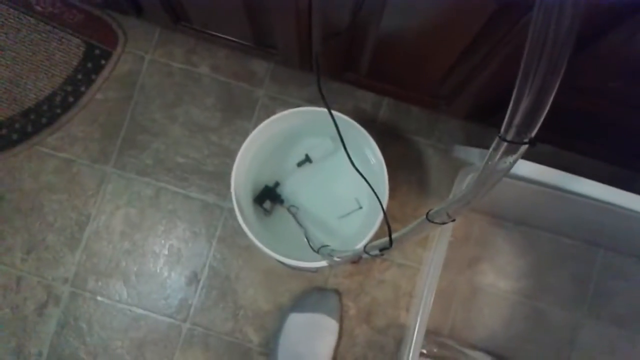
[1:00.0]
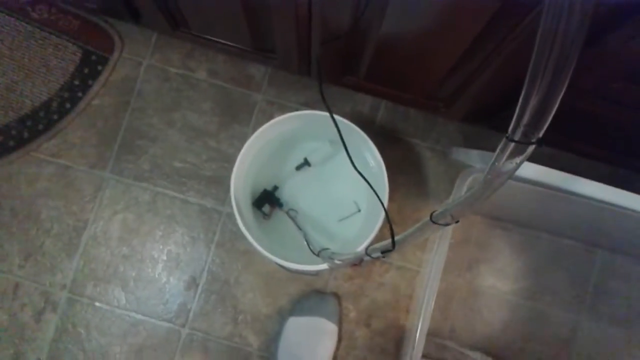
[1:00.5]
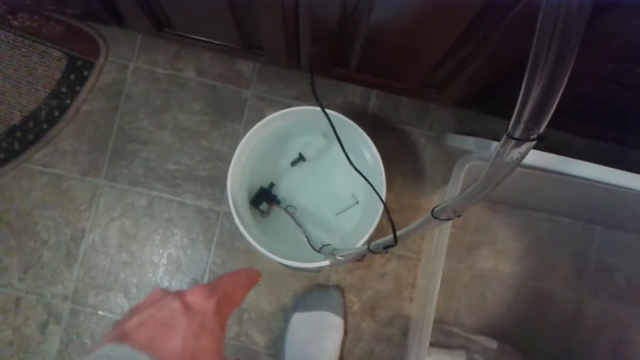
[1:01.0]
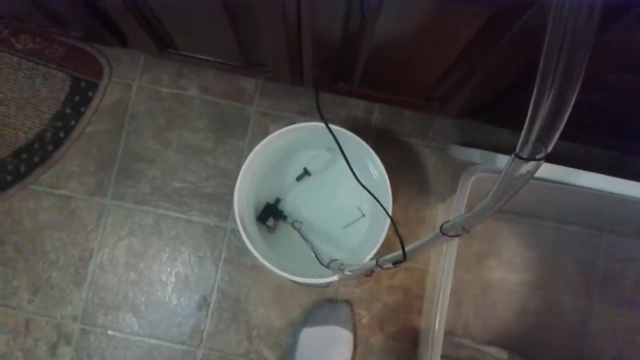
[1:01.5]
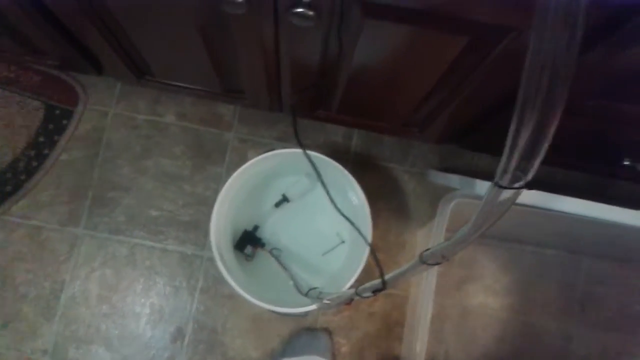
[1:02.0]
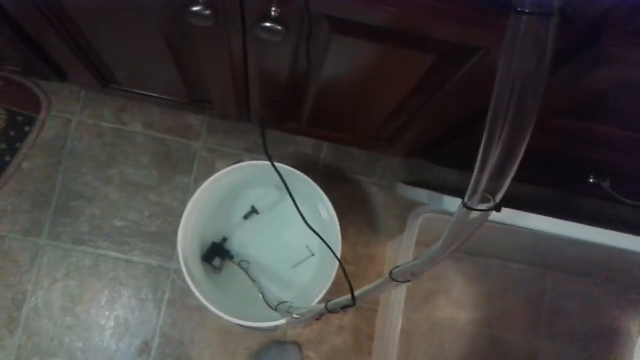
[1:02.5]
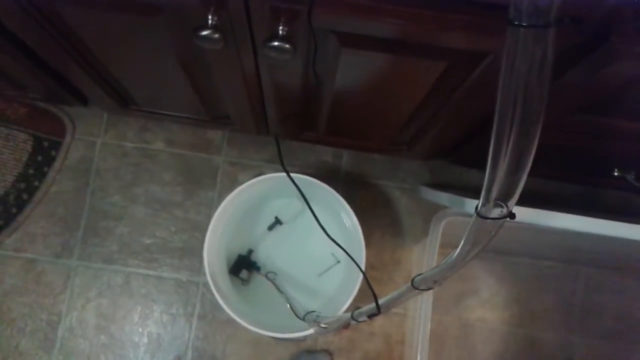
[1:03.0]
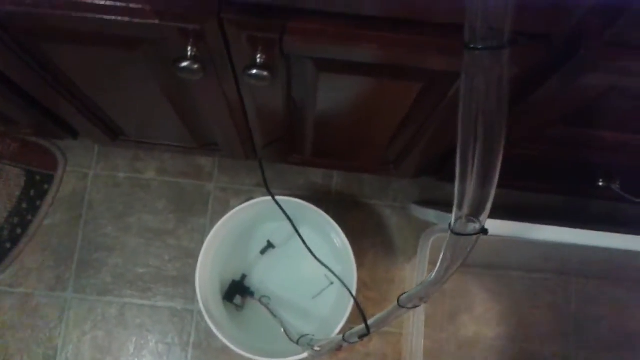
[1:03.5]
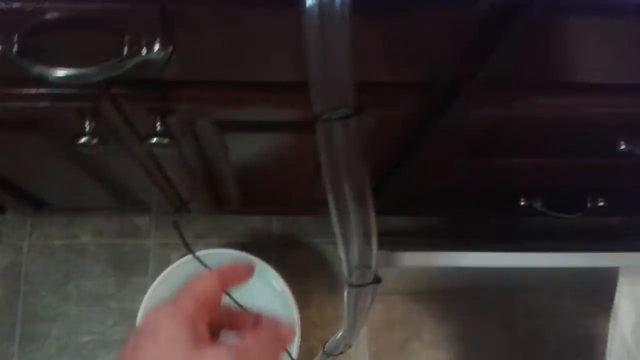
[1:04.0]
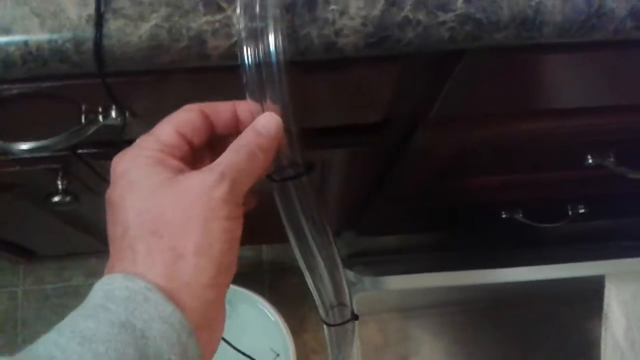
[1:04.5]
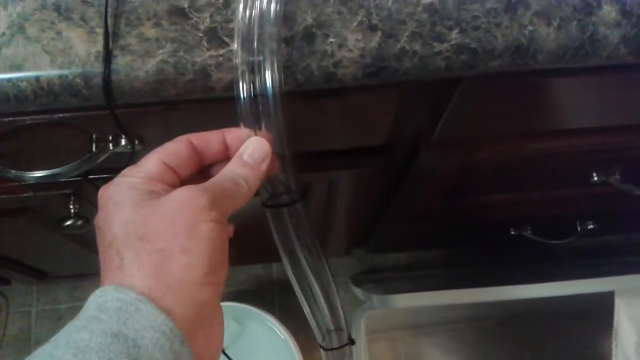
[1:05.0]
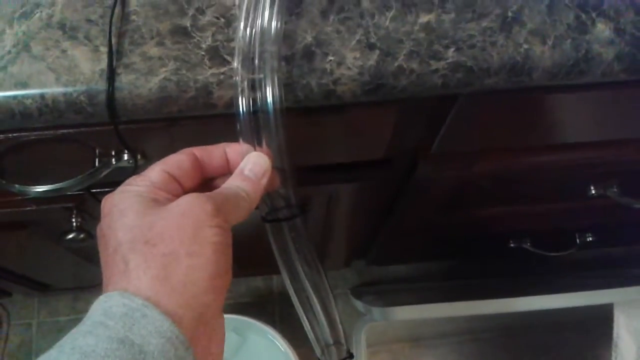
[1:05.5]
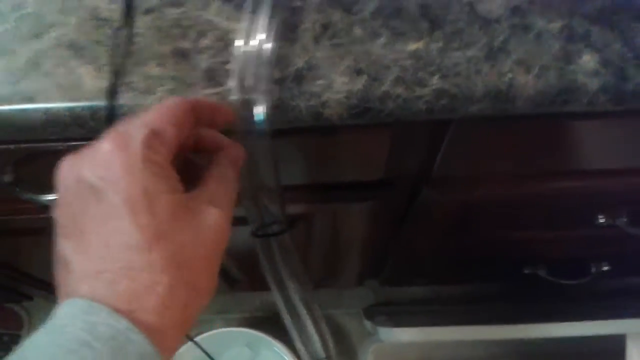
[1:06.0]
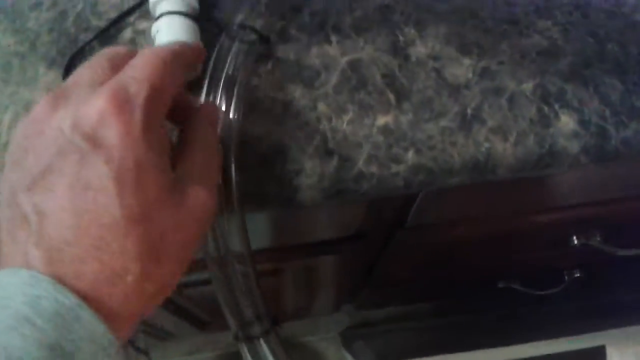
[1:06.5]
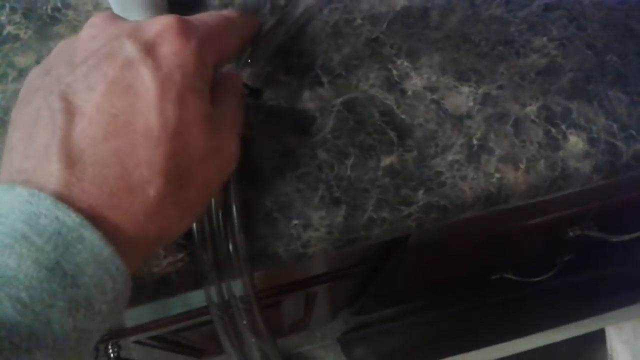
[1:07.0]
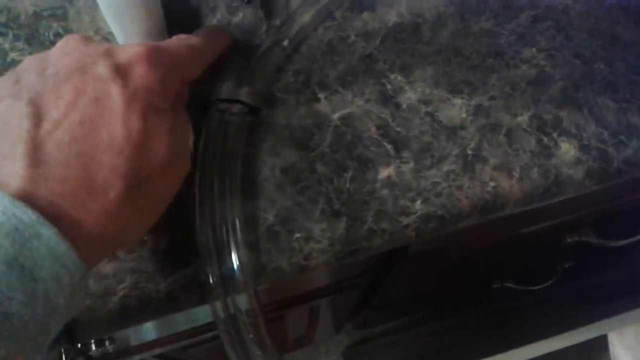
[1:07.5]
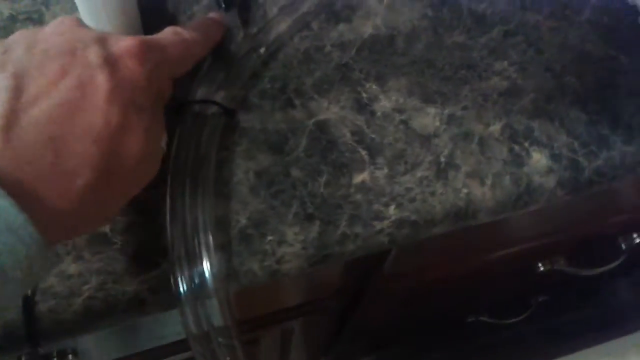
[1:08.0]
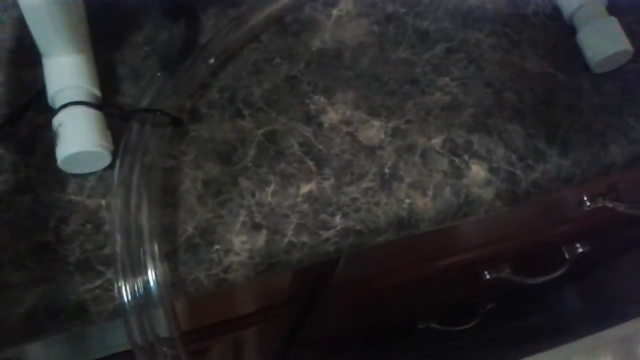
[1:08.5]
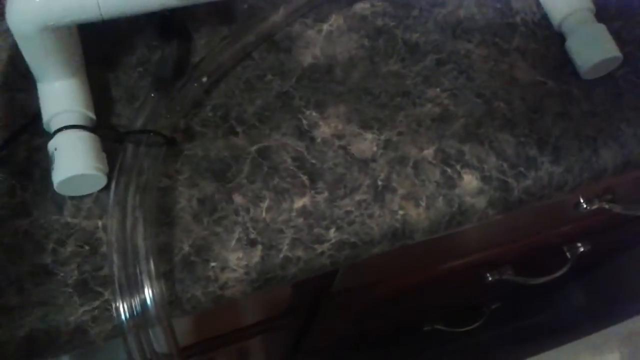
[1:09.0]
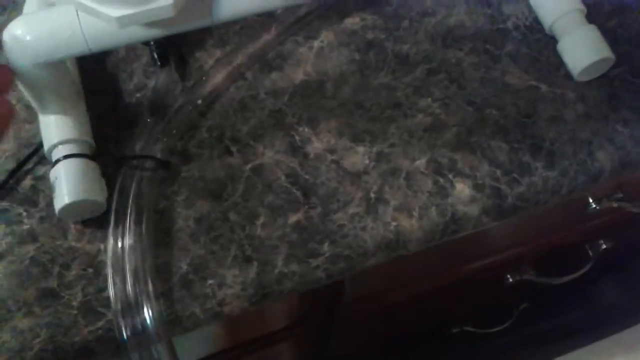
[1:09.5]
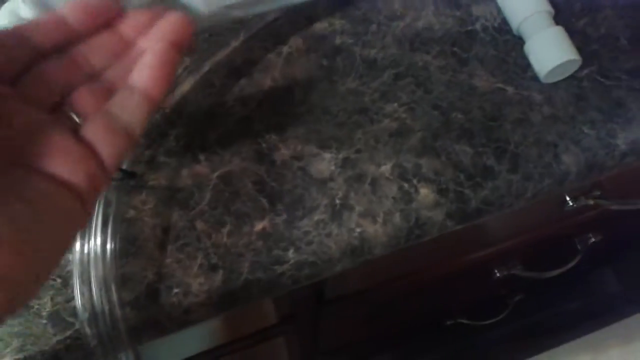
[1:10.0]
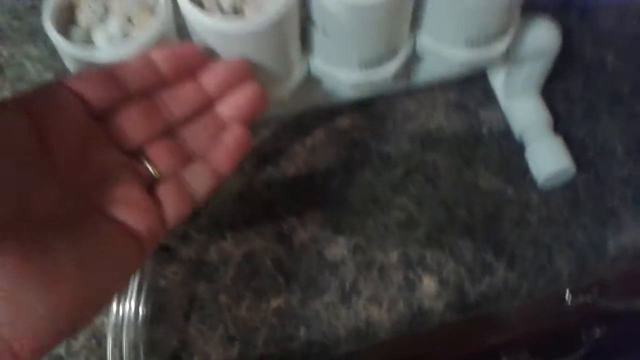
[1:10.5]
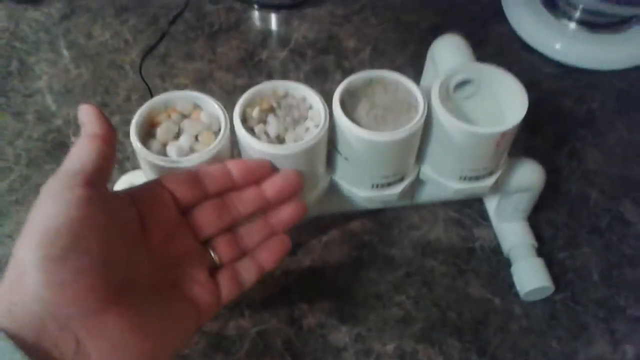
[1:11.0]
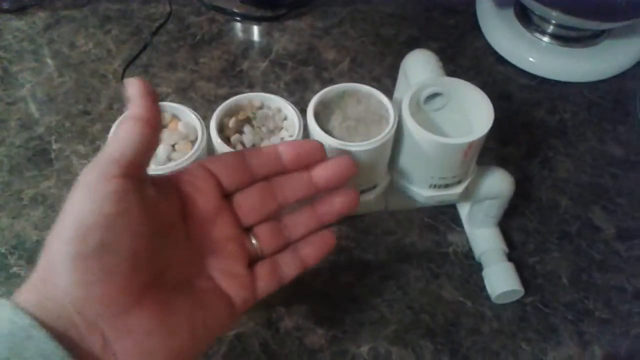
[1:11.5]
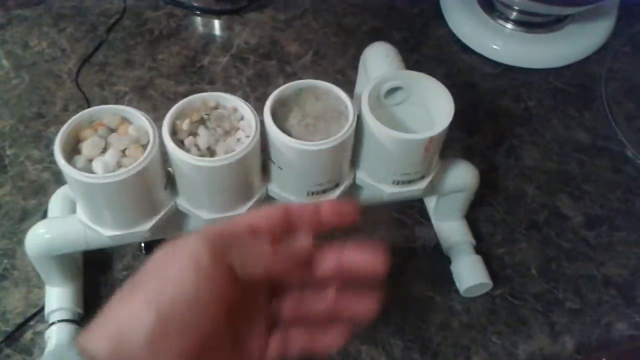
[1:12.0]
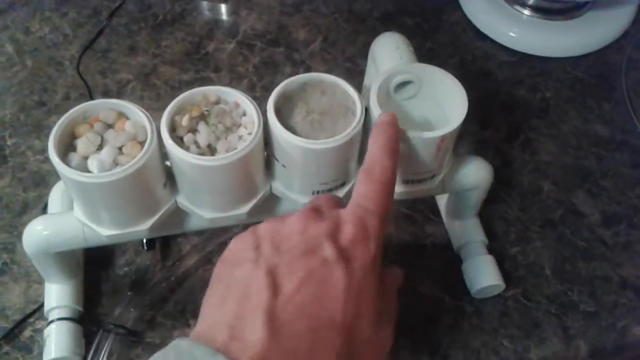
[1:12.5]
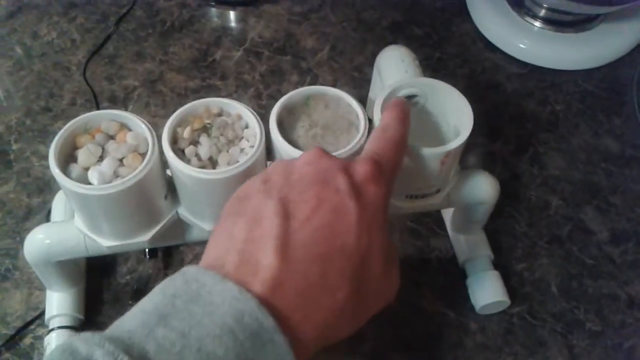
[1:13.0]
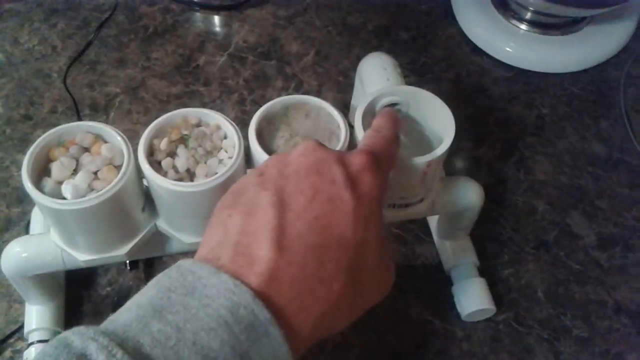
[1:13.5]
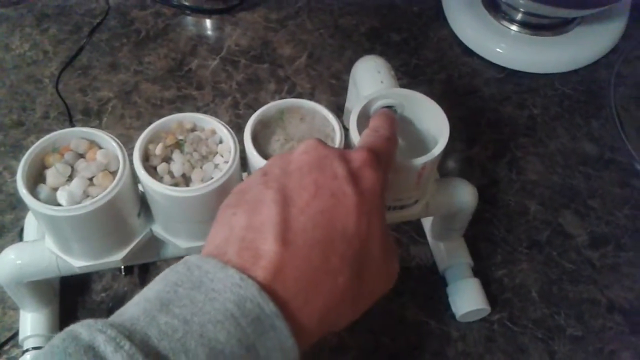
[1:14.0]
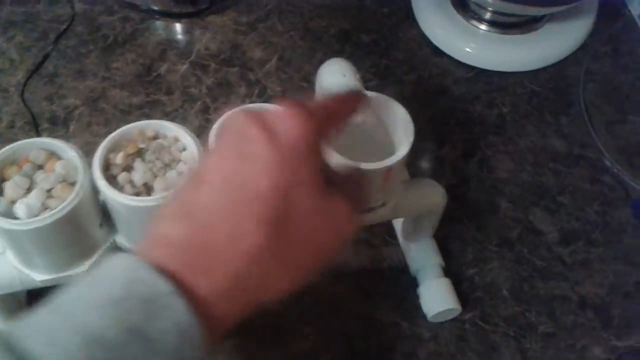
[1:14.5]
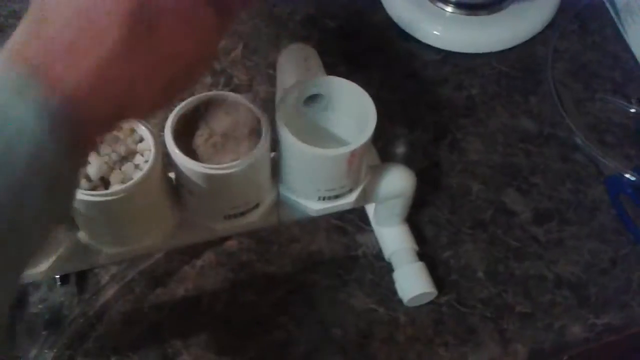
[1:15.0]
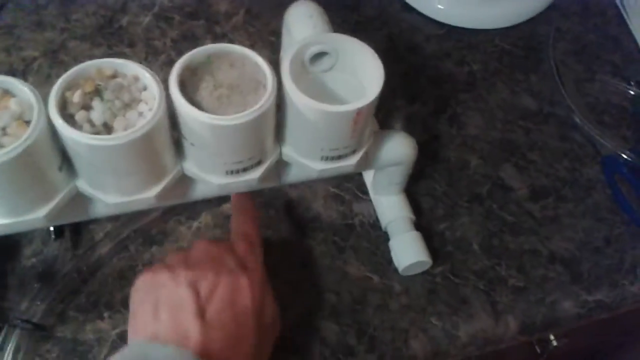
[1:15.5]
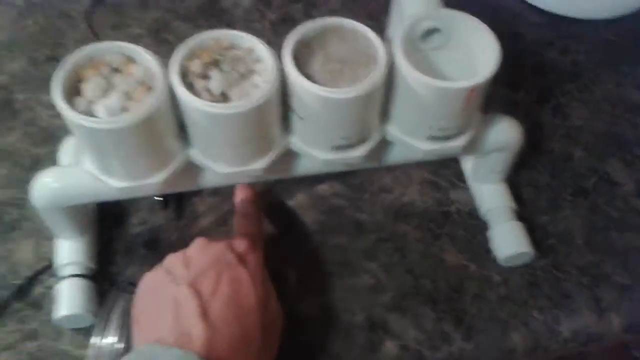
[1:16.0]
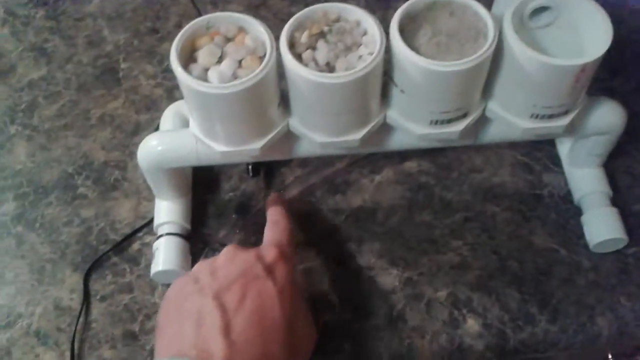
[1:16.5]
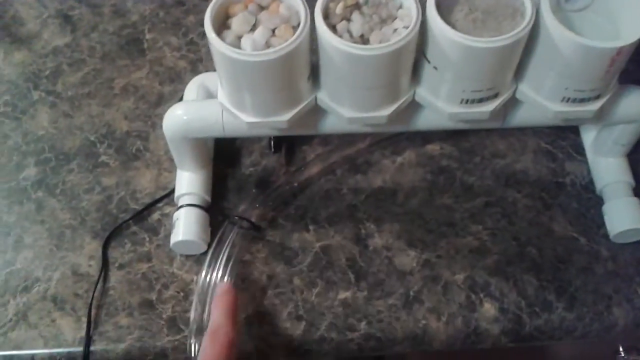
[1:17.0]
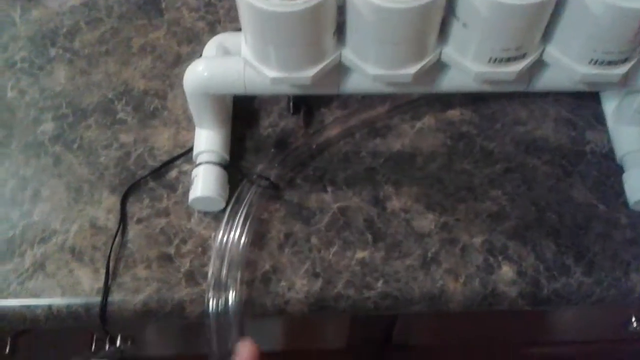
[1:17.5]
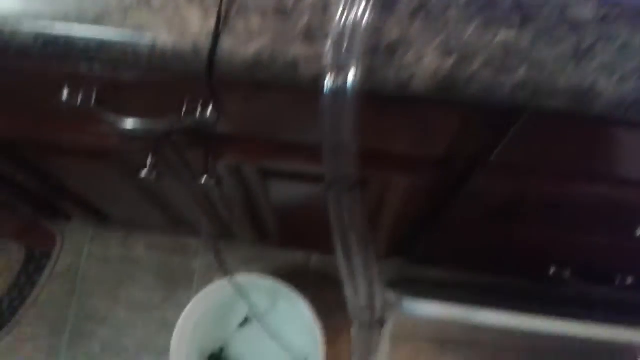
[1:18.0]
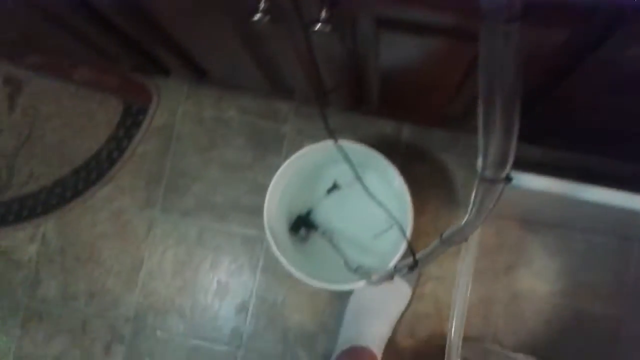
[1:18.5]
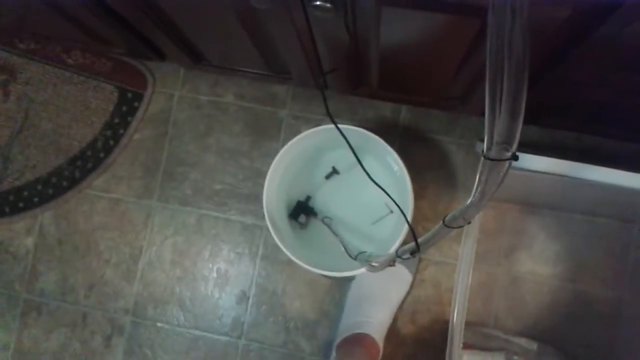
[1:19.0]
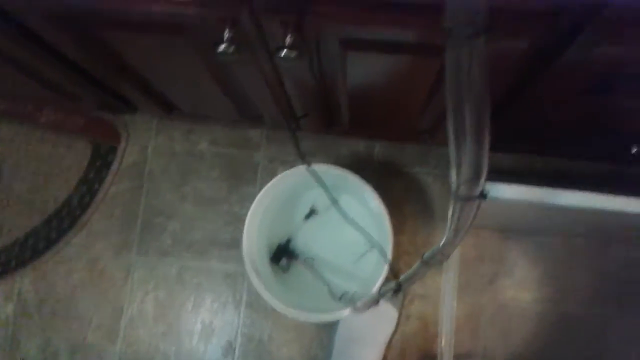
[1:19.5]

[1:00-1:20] The DIY how-to video shows what appears to be a hydroponic garden, with only about one stem in each container. There are three cylinder-like containers: one holds thick rocks, one holds somewhat finer rocks, and one looks like it holds sand. Clear plastic tubing goes down from the kitchen counter into a bucket. Inside the bucket are some parts: one looks like a small Allen wrench of the kind from Ikea, one looks somewhat like a house-painting roller, and something black kind of looks like part of a pump, apparently like a fish tank pump. A man without shoes points at it and then touches the pipe. Two pipes are zip-tied together. He demonstrates something and points to the last container on the right, which has a hole in it but is not filled with anything like the other three are.